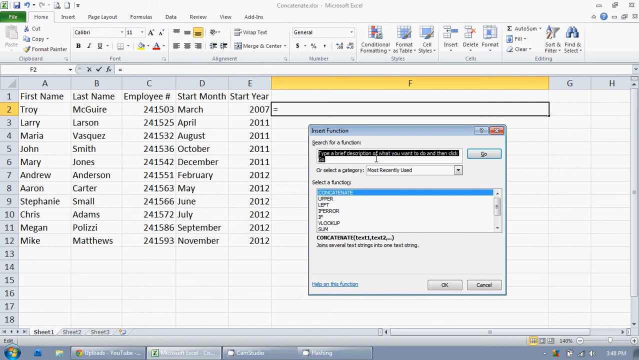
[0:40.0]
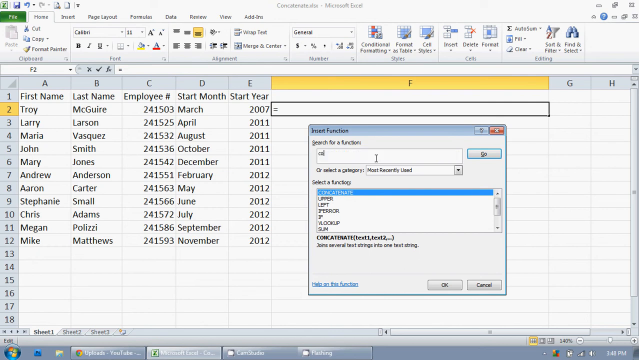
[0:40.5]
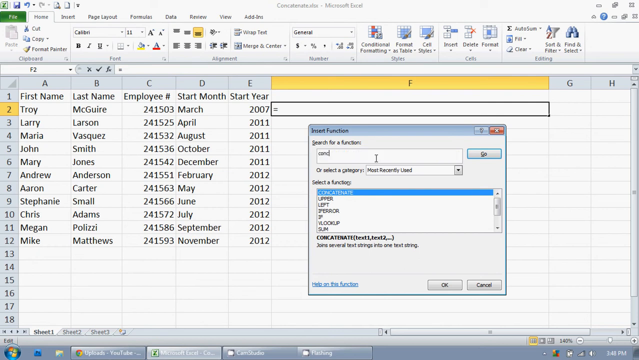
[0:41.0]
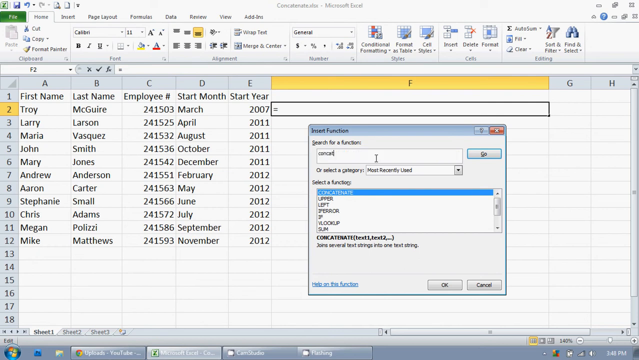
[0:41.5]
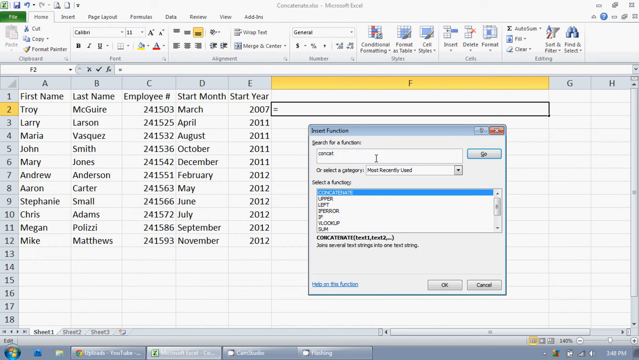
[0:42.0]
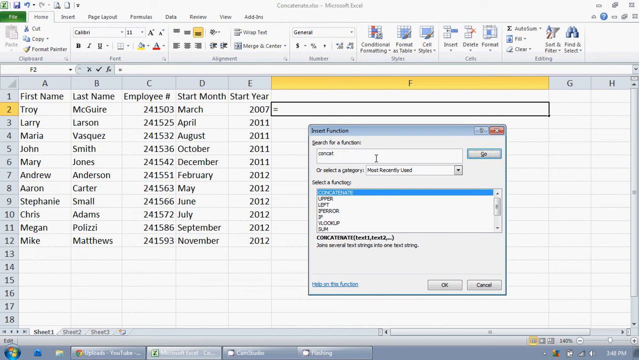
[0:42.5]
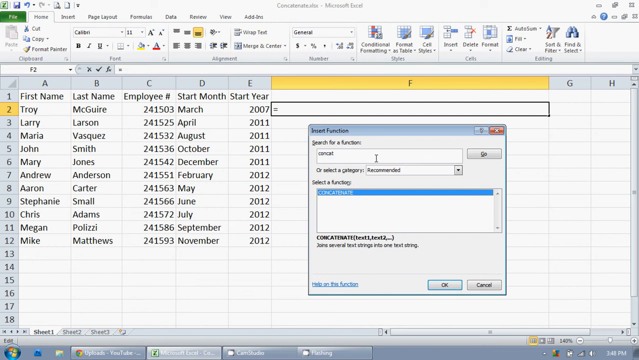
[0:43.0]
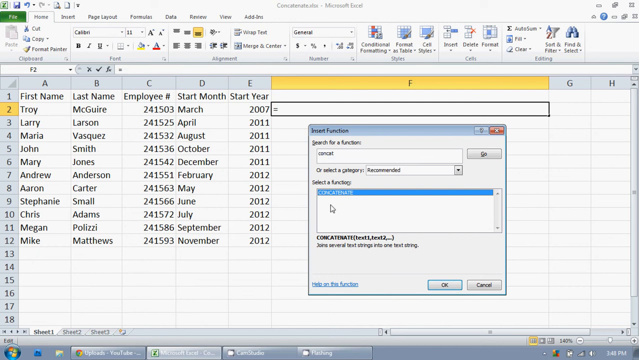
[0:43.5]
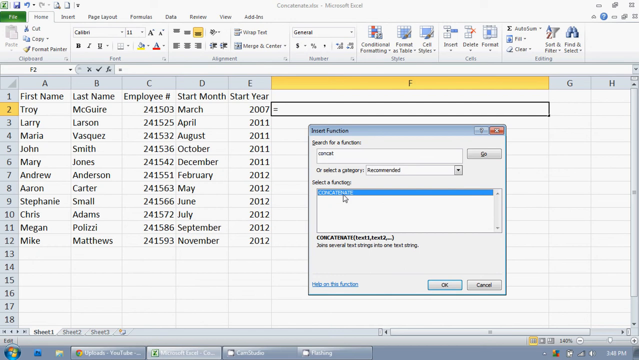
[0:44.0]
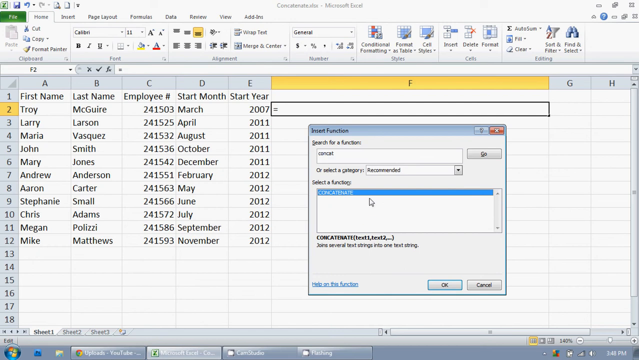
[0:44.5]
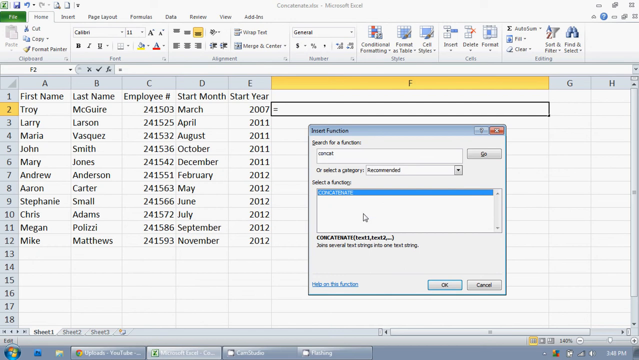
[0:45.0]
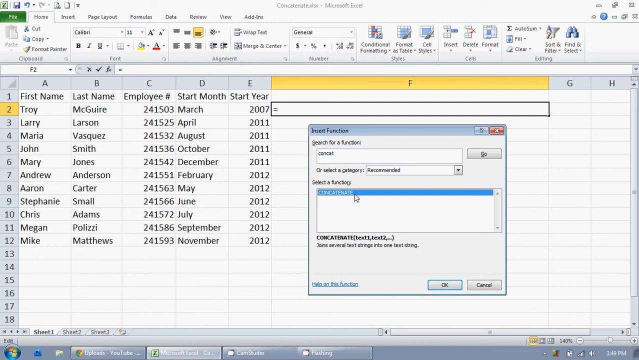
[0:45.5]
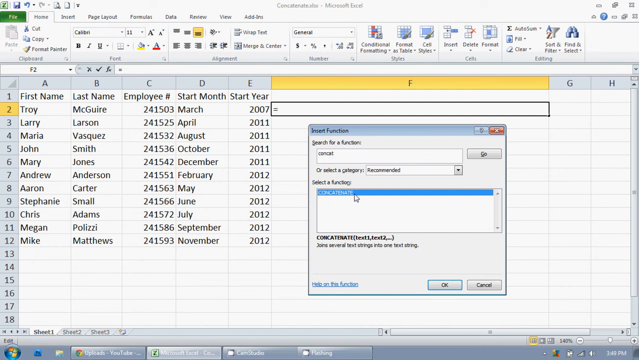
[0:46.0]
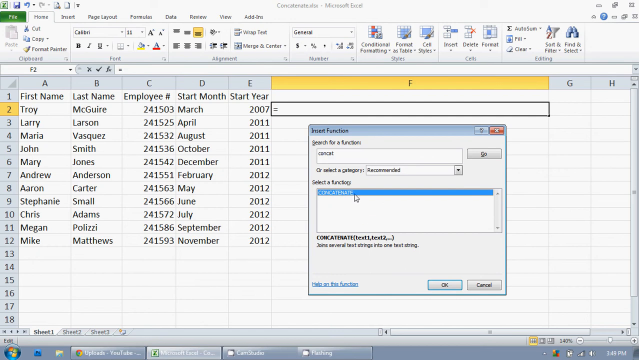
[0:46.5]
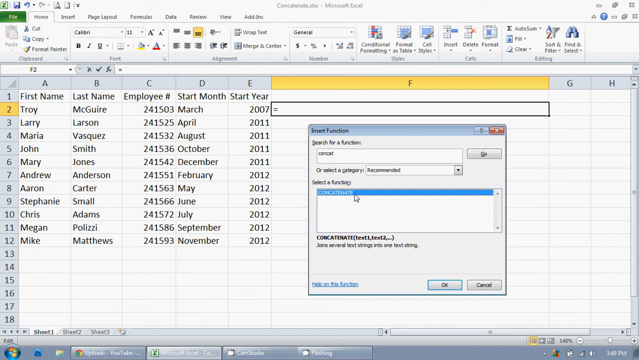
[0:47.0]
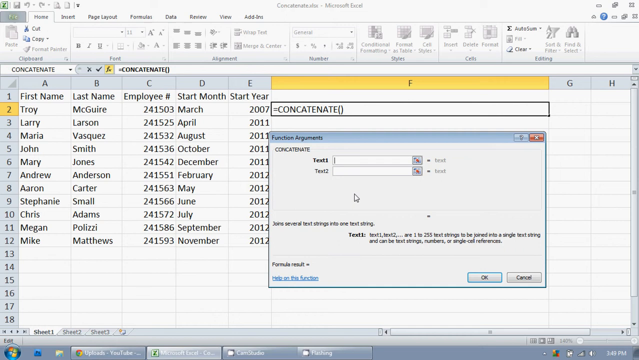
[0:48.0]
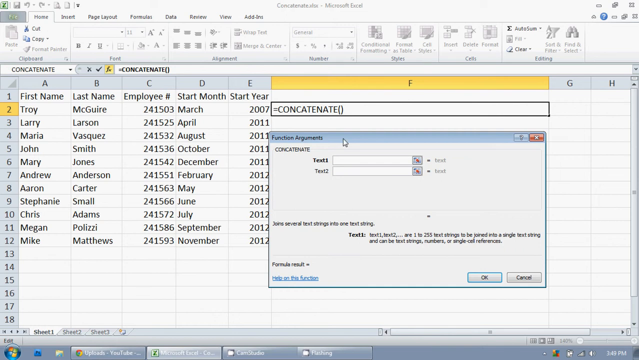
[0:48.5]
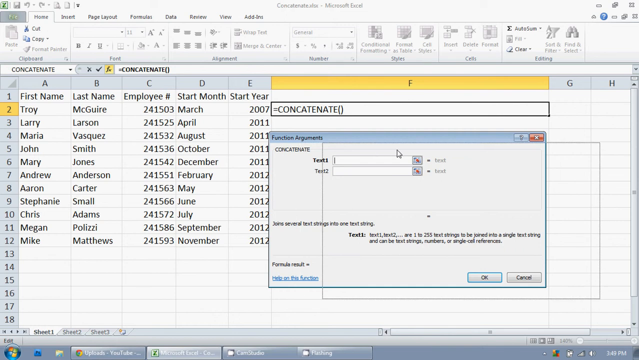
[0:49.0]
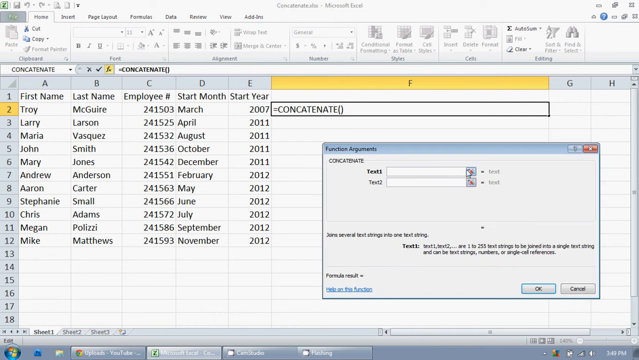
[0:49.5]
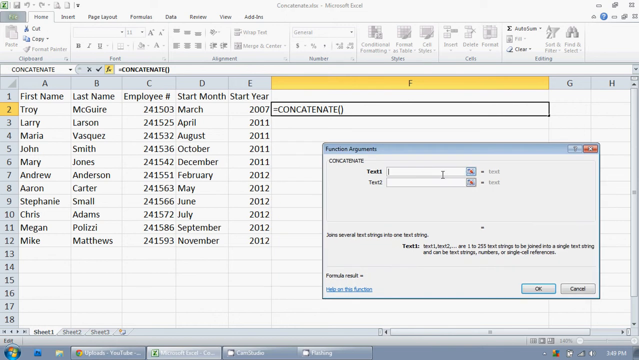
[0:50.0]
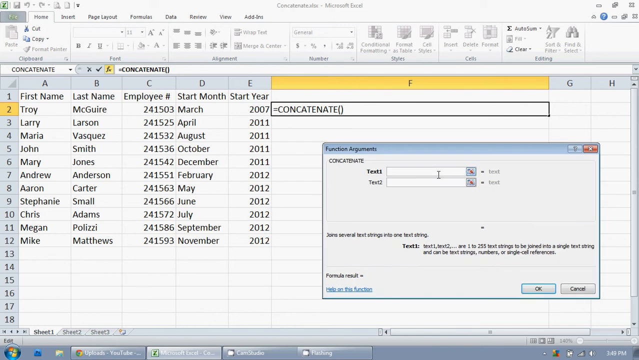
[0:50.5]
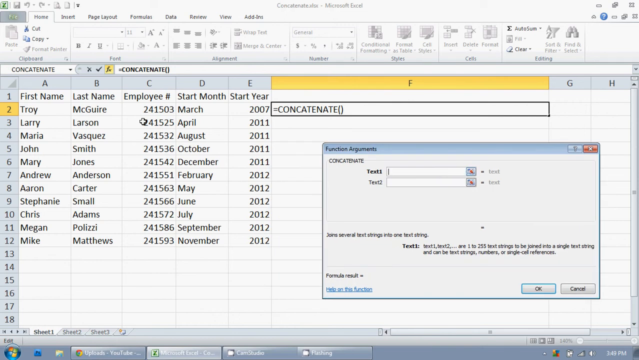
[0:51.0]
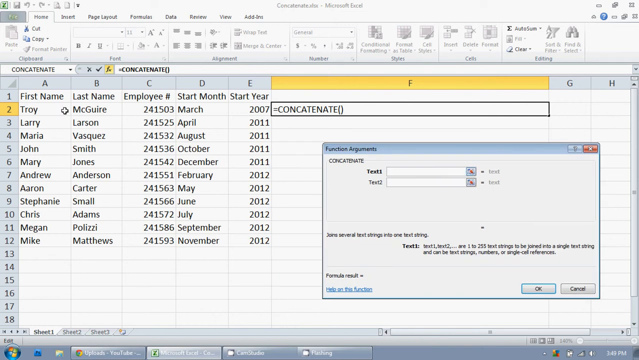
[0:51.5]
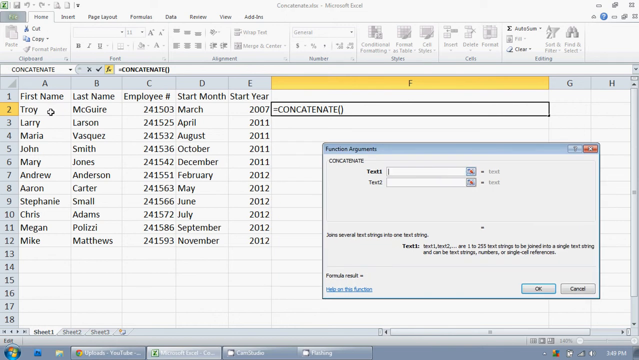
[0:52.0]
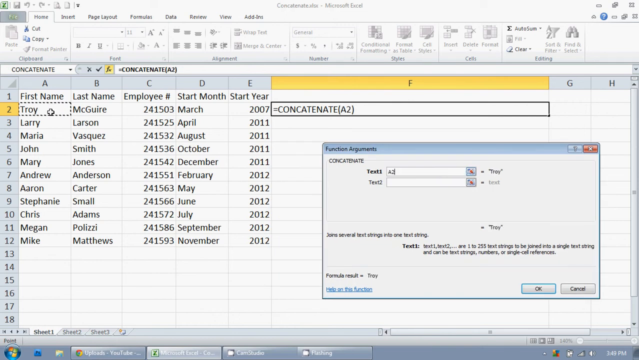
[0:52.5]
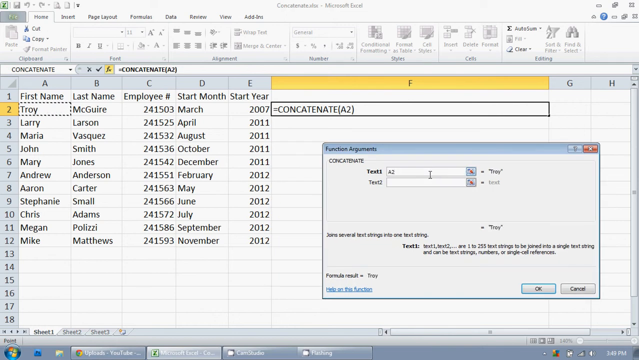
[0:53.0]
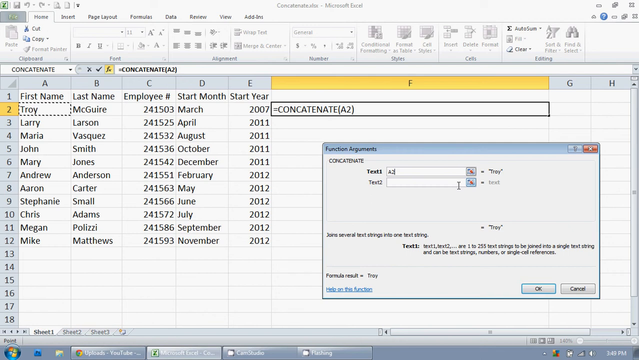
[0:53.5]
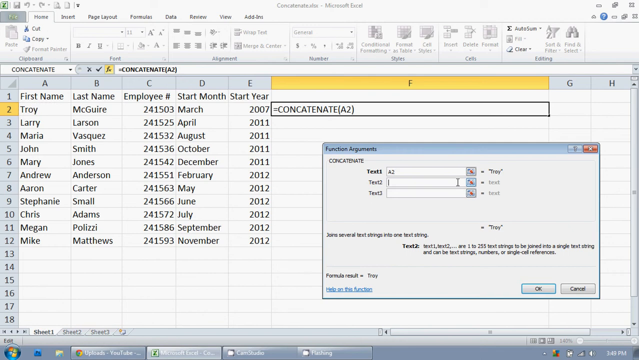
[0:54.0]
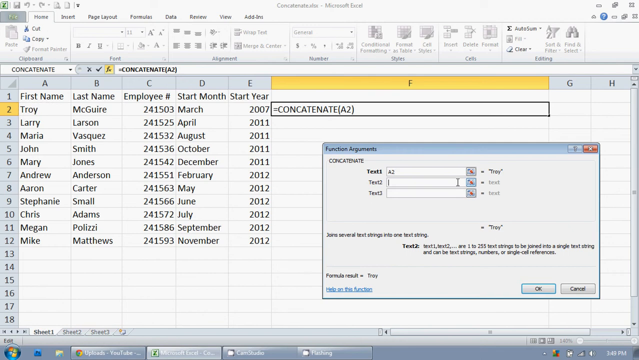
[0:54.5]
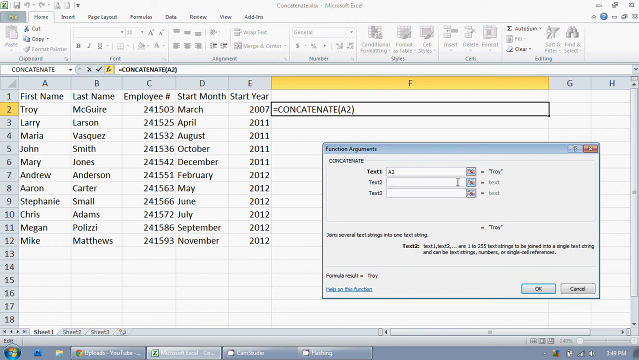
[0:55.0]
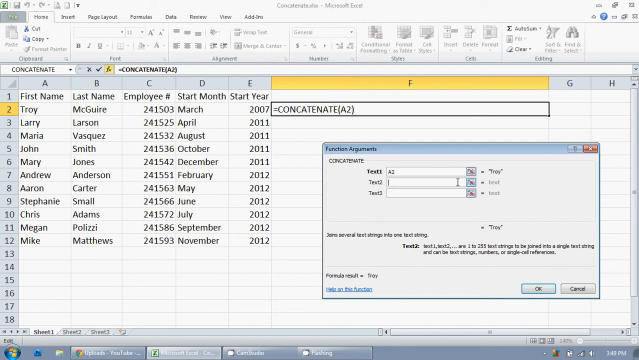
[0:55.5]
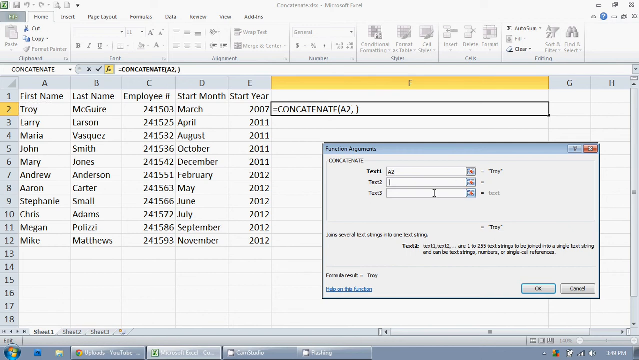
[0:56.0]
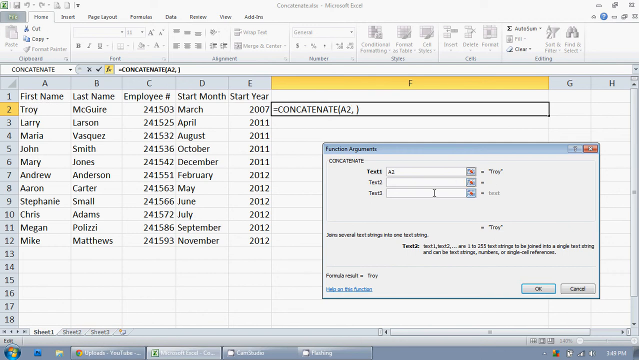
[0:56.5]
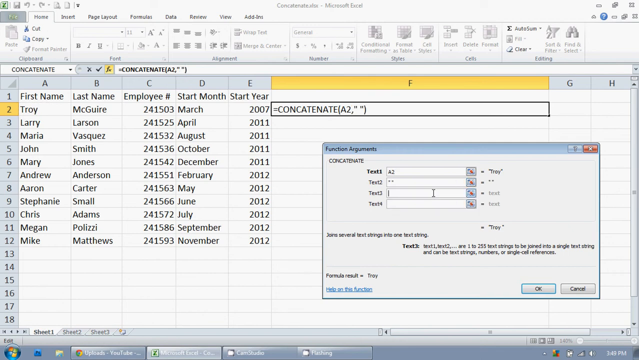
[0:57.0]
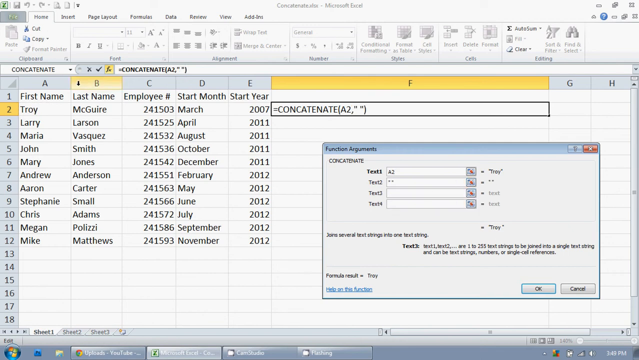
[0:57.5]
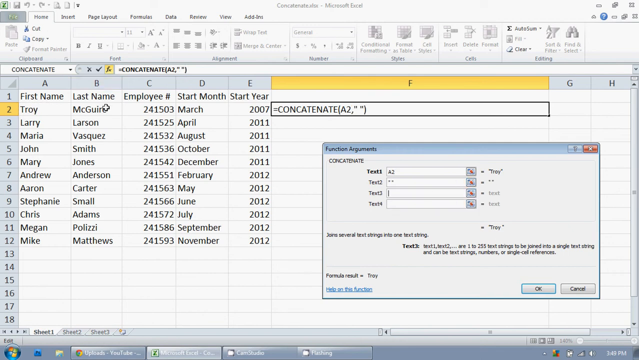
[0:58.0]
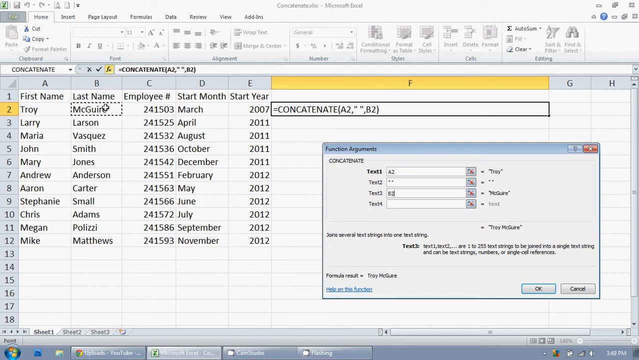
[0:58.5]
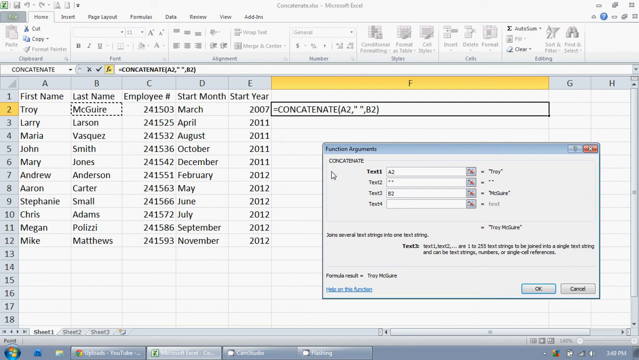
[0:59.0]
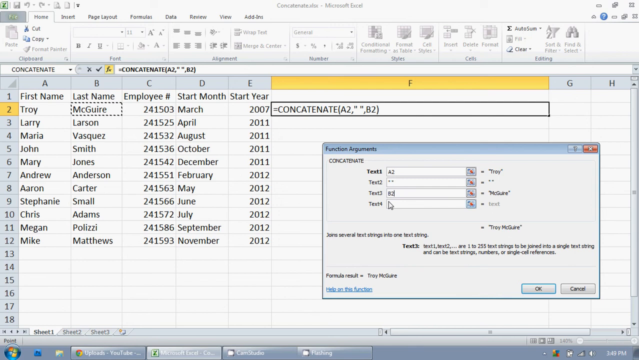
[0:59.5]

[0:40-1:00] In the new toolbar, the teacher deletes the original content in the search box, enters a new function, and selects it in the select function field. The function searched for is called concat. Another toolbar pops up with the title "function argument"; its words are too small and blurry to distinguish accurately. This toolbar has two rows, text1 and text2. The mouse selects the name Troy in column A of the second row and enters it into text1. The teacher then enters some information into text3, apparently leaving the text2 line blank.